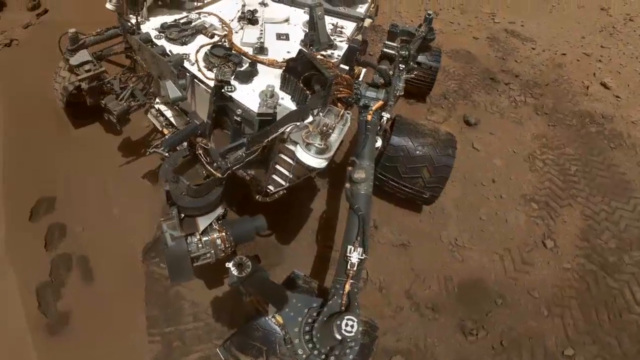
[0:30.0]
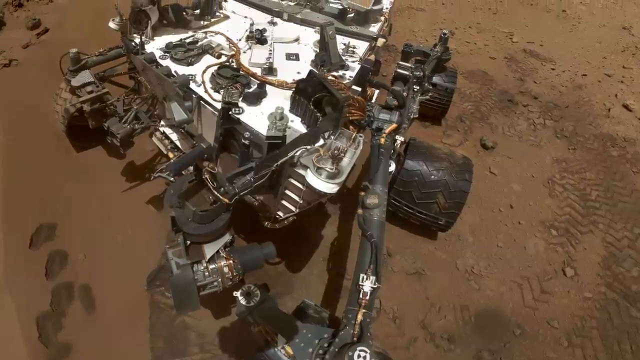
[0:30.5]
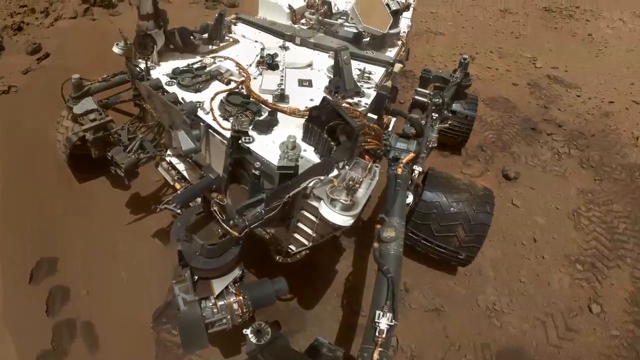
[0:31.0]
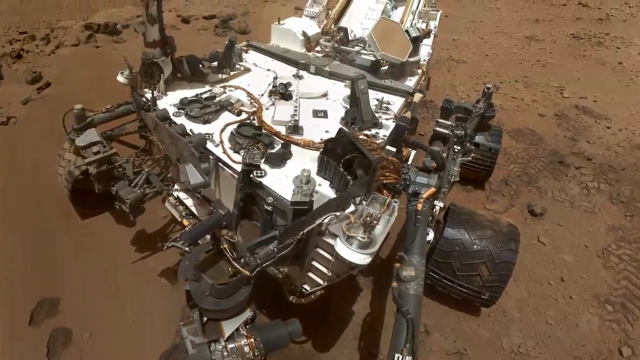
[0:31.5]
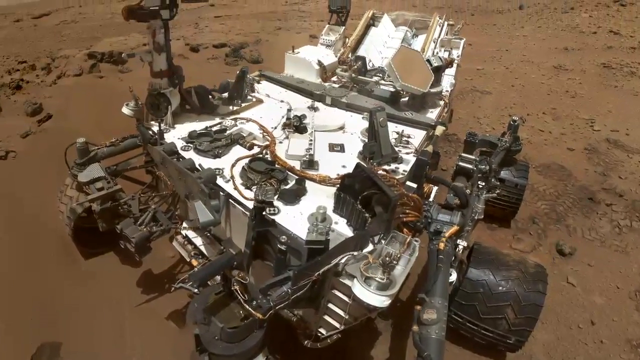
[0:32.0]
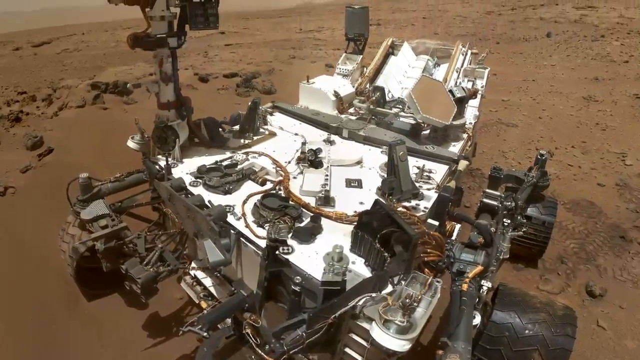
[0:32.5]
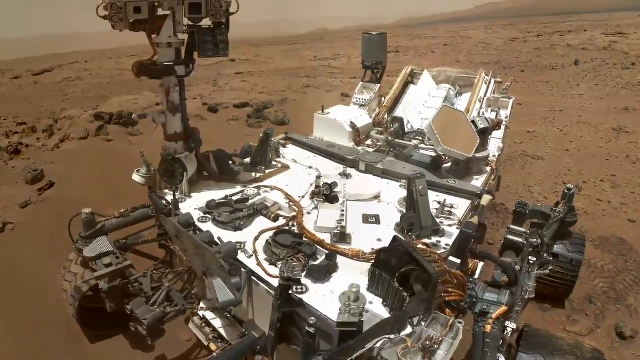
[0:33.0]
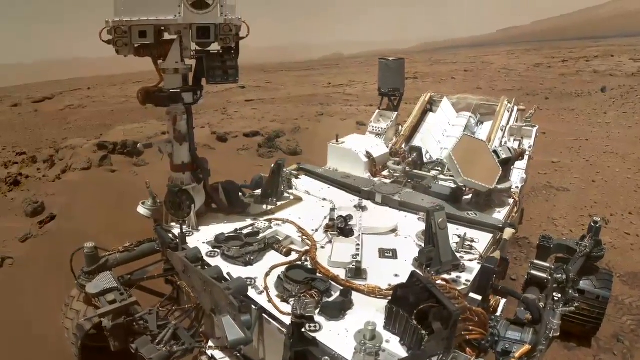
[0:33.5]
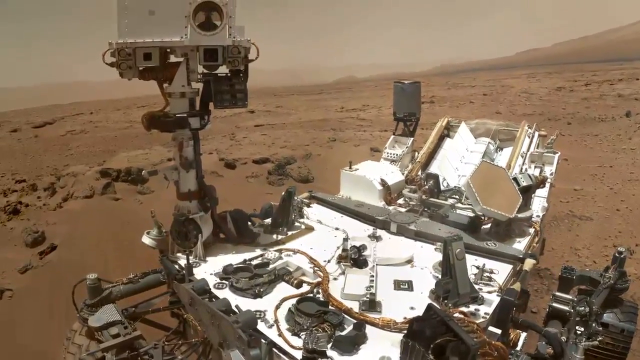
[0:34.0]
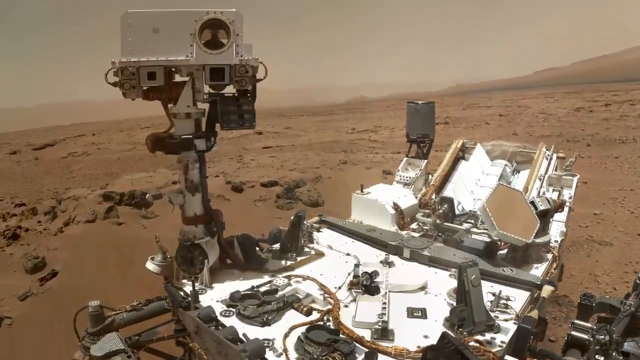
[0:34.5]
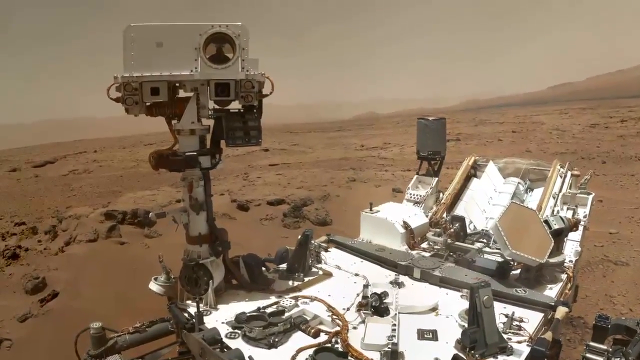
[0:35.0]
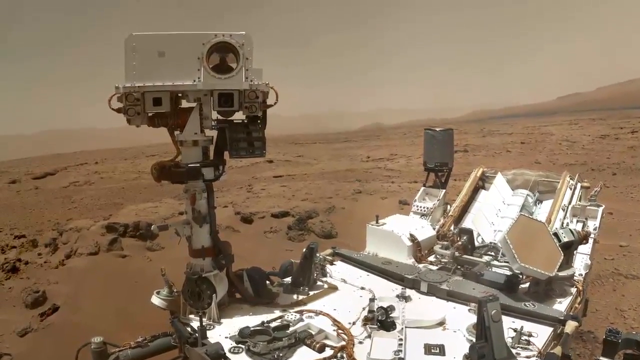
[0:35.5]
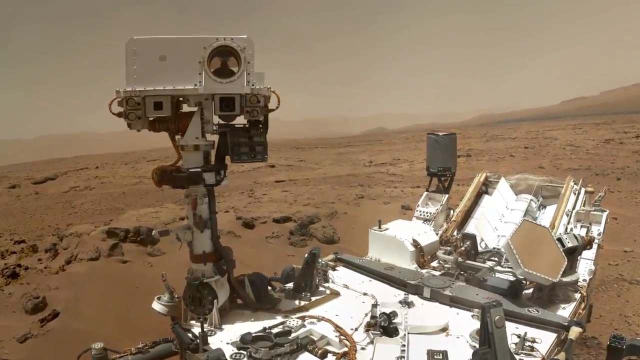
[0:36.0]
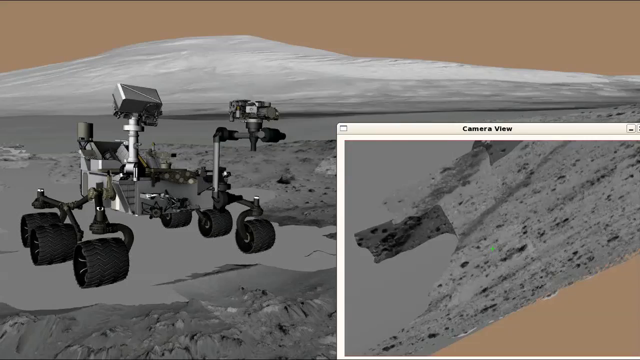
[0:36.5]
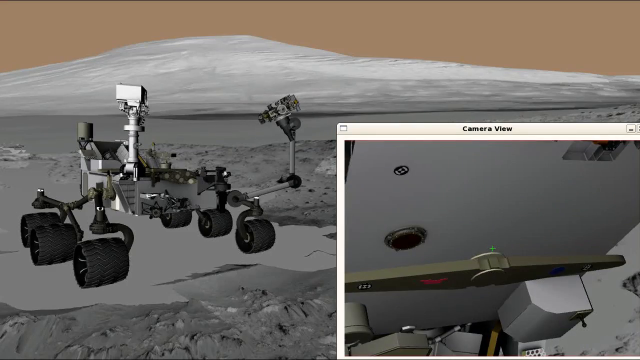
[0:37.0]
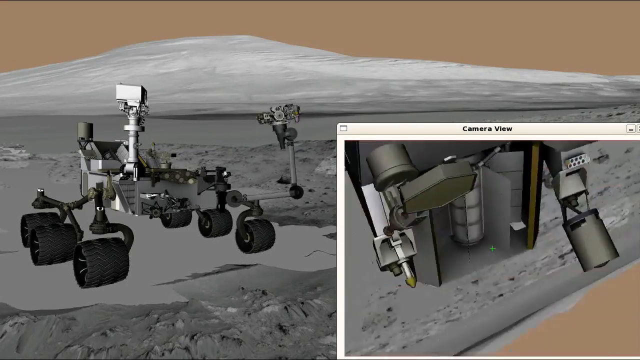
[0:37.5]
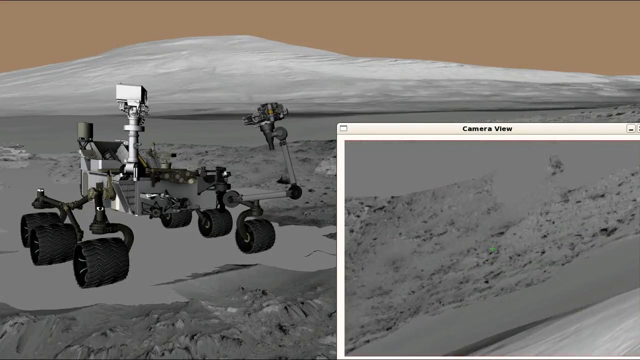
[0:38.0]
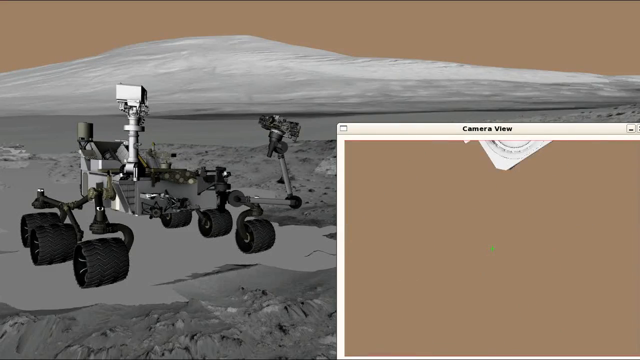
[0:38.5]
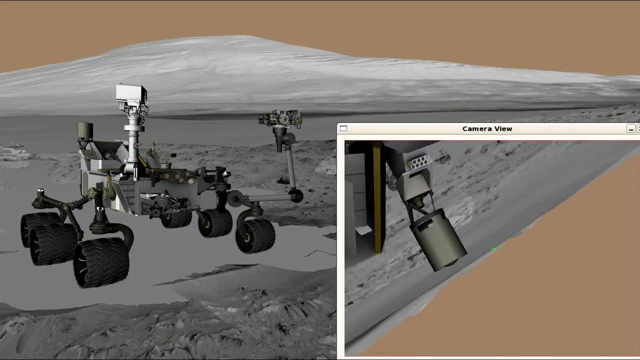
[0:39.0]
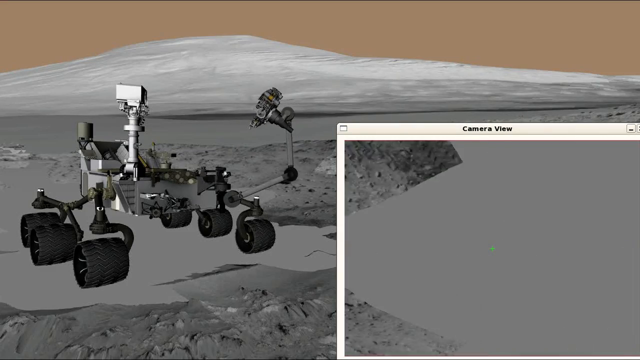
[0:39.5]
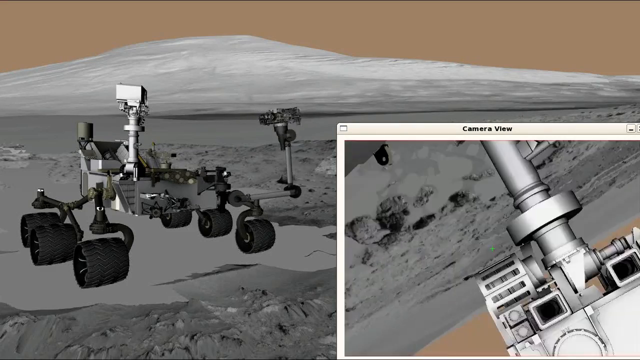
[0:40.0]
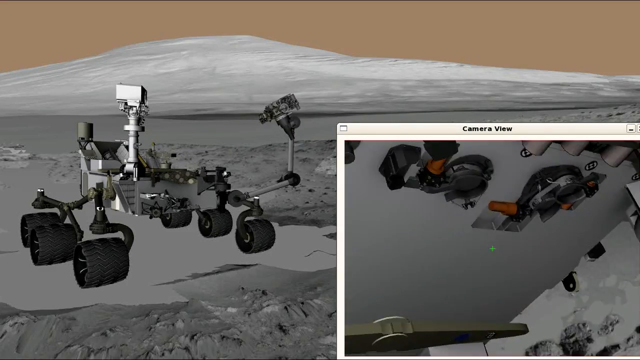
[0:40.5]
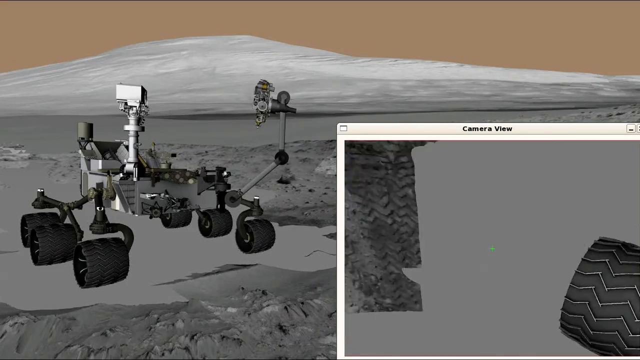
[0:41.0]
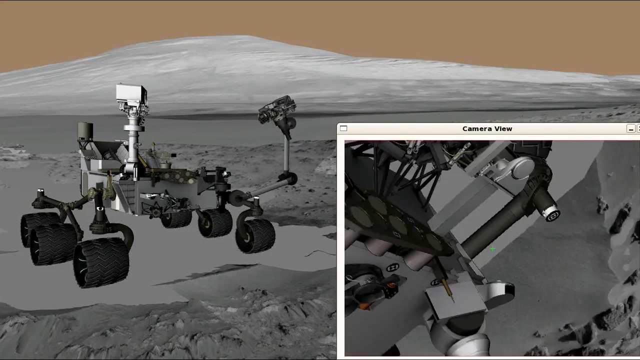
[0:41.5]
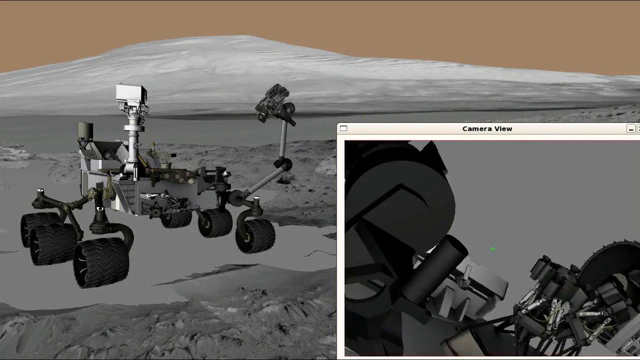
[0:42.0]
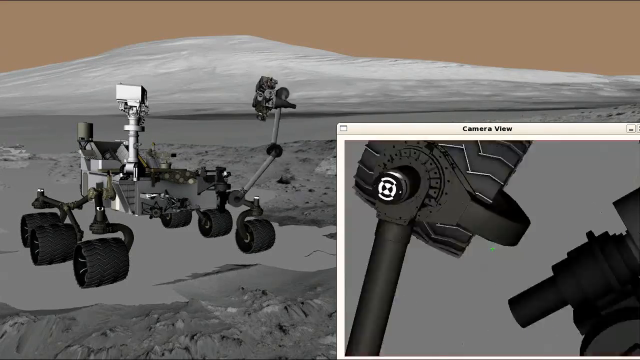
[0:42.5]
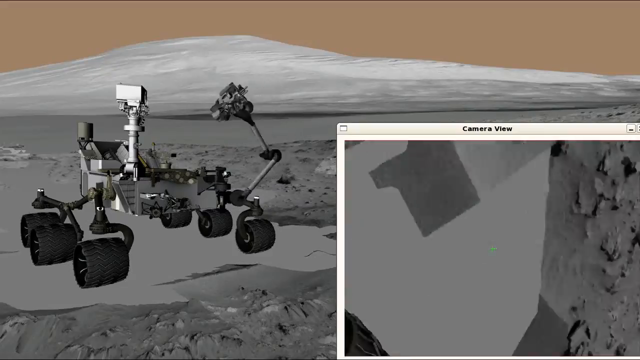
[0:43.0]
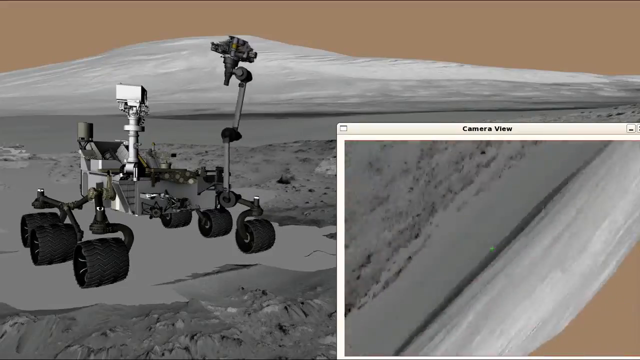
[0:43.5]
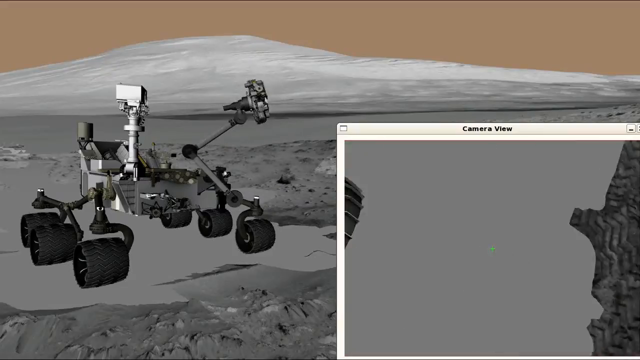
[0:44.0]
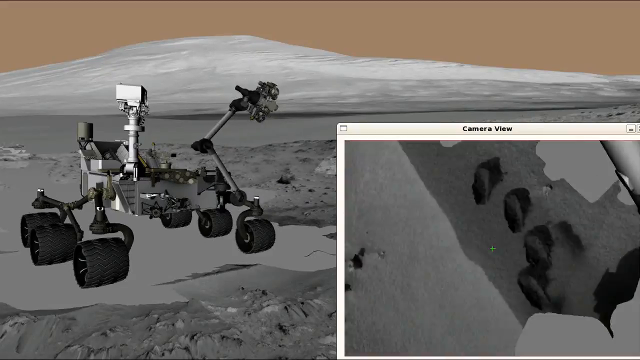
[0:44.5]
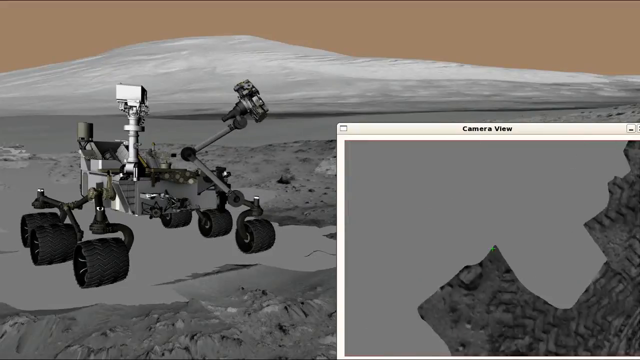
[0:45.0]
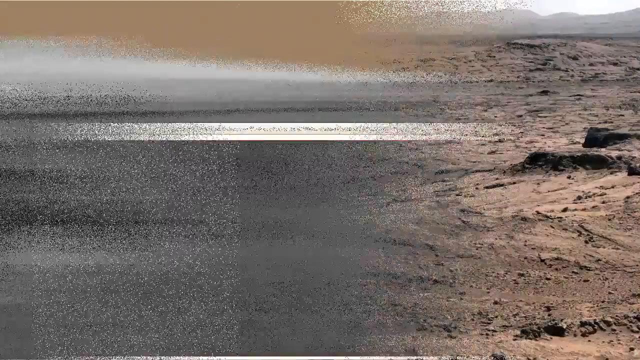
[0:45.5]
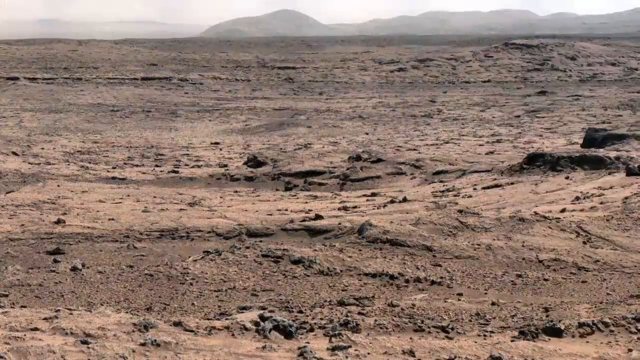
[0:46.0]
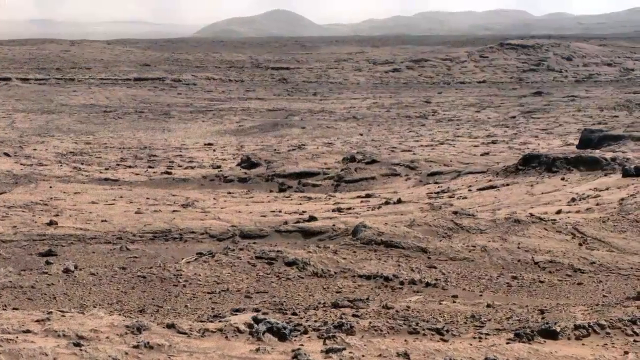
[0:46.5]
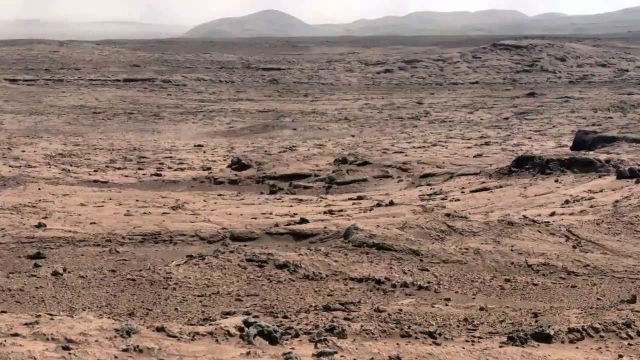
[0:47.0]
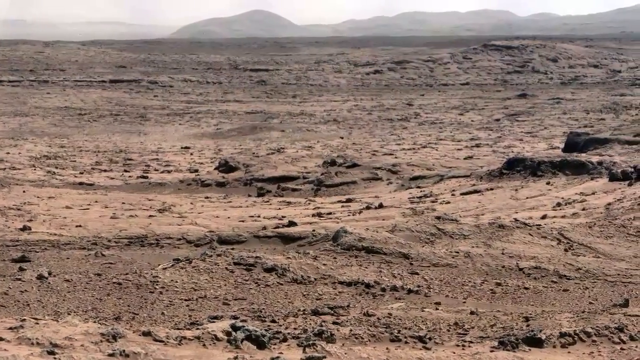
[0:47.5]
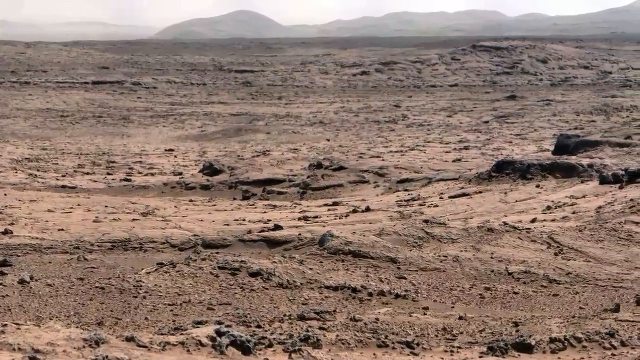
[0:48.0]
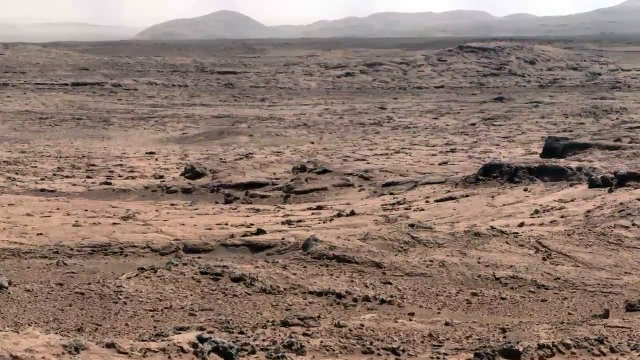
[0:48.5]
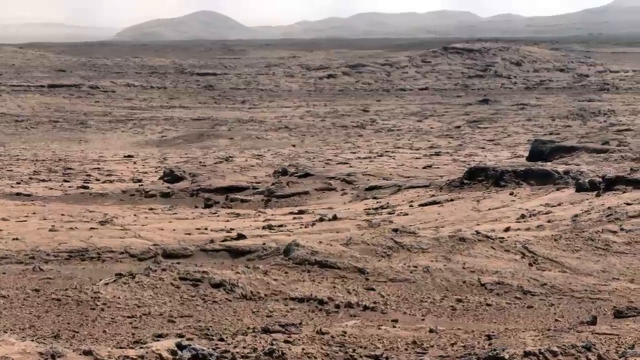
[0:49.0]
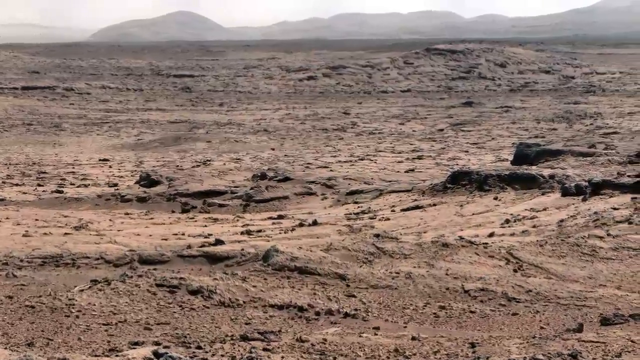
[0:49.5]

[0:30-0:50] A robot is visible on Mars, and it apparently takes a lot of pictures.